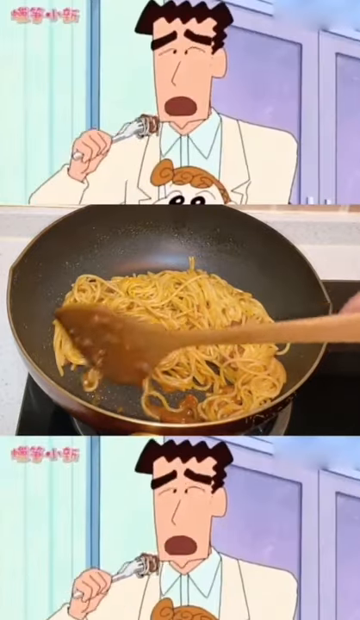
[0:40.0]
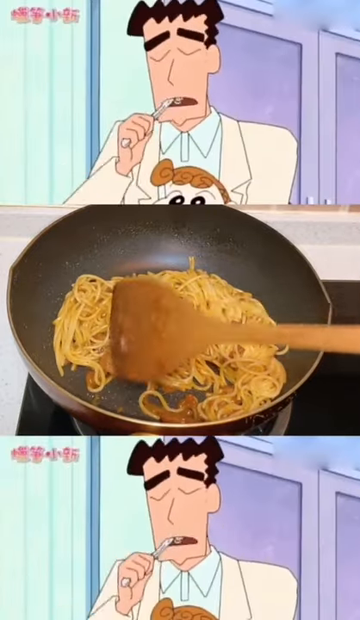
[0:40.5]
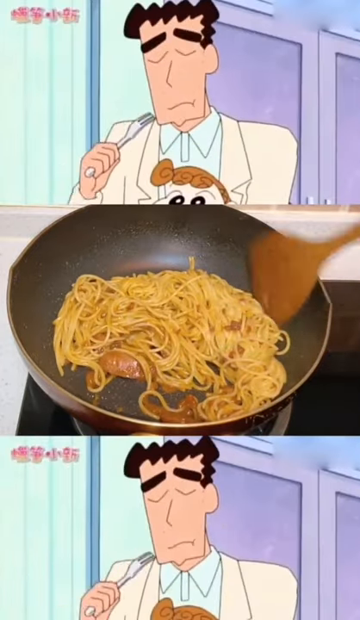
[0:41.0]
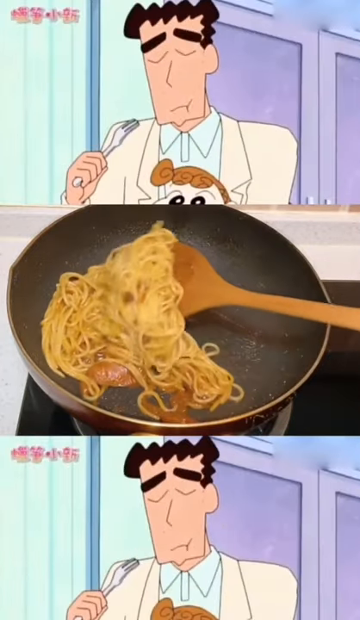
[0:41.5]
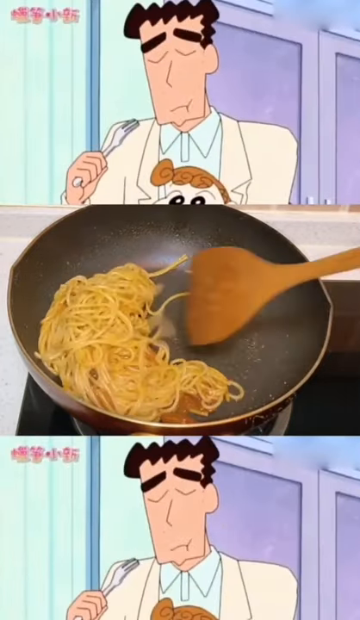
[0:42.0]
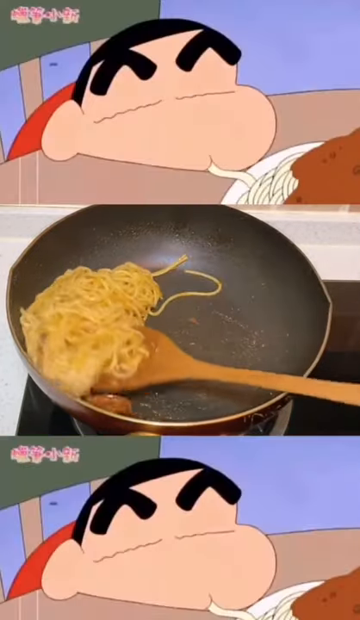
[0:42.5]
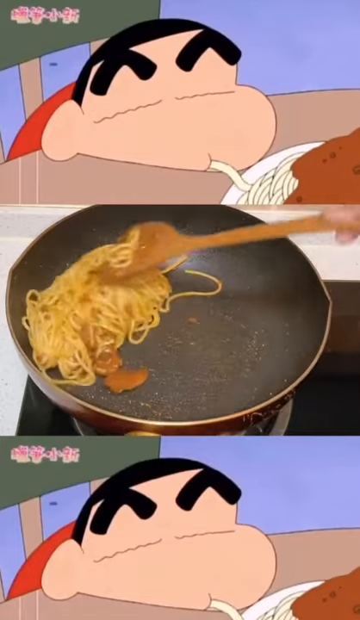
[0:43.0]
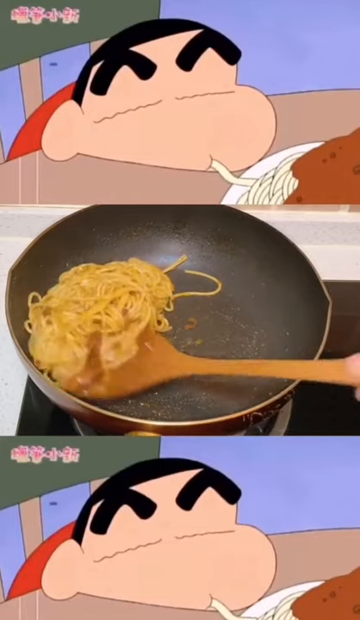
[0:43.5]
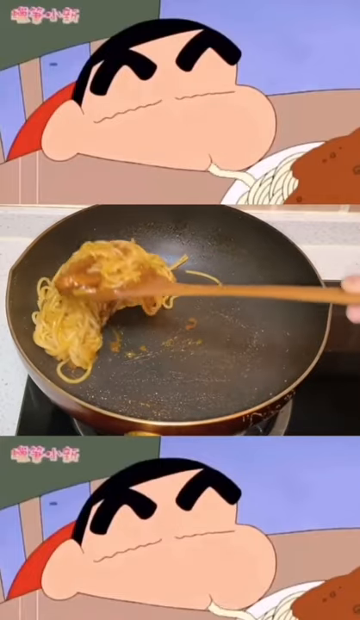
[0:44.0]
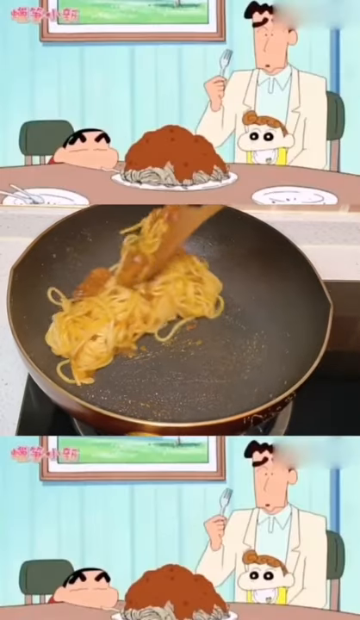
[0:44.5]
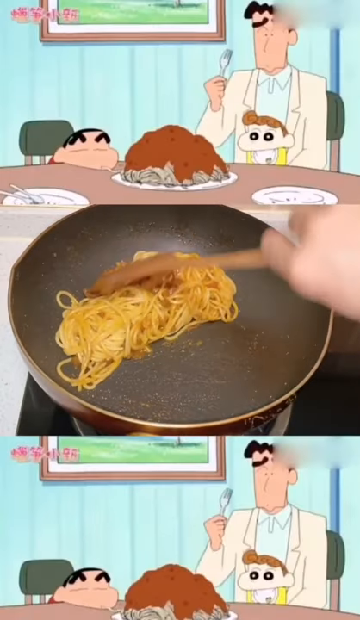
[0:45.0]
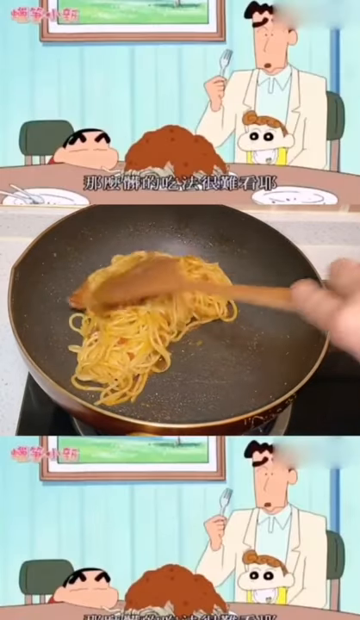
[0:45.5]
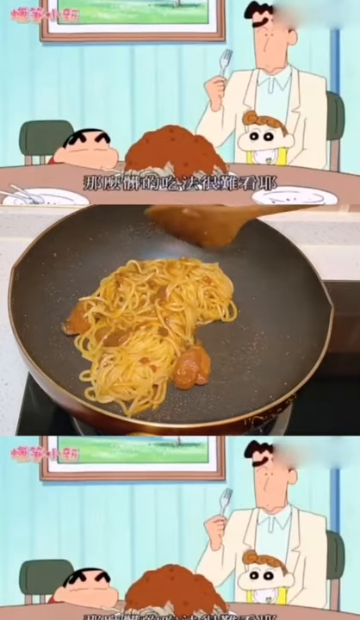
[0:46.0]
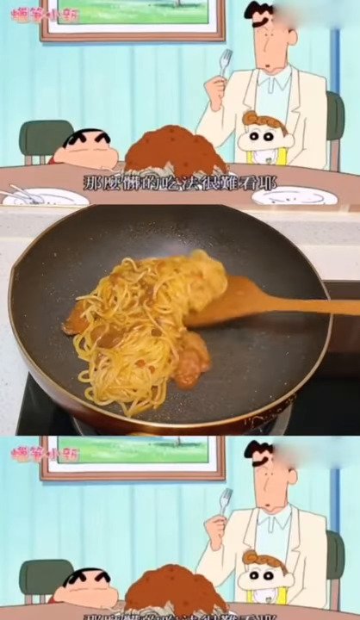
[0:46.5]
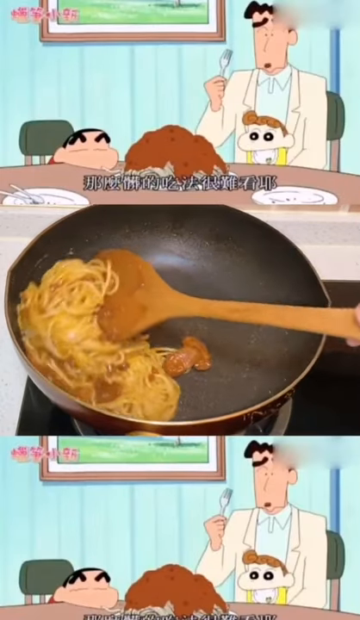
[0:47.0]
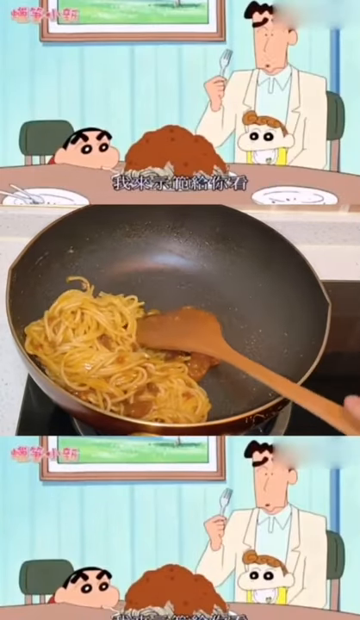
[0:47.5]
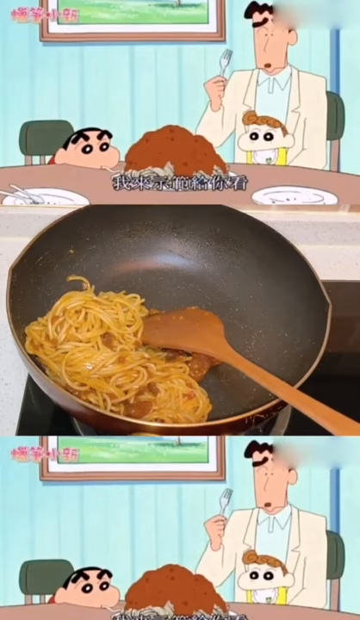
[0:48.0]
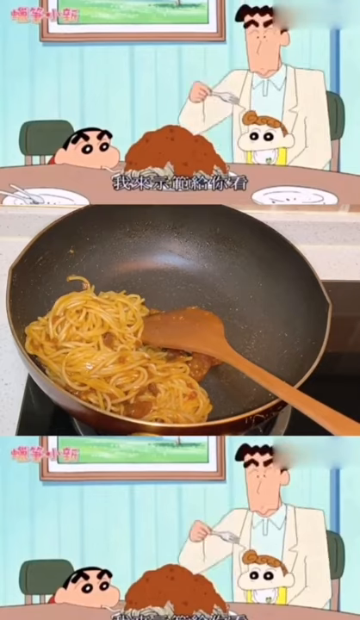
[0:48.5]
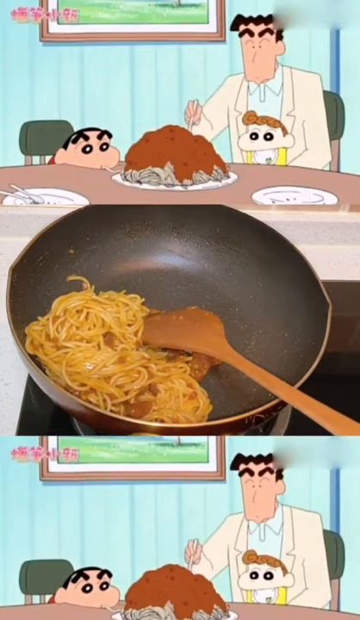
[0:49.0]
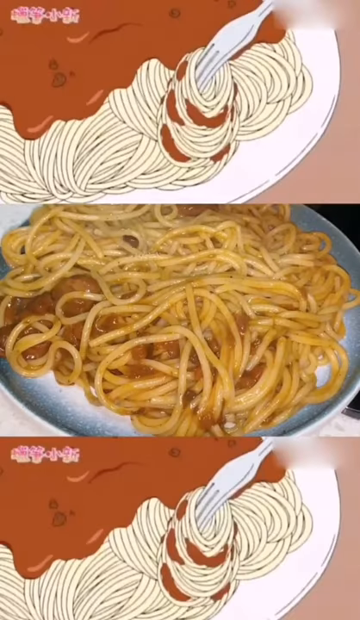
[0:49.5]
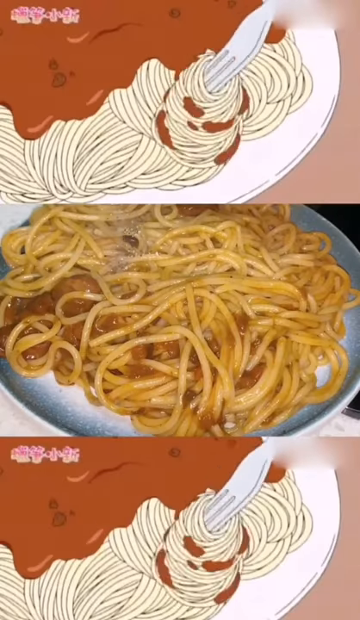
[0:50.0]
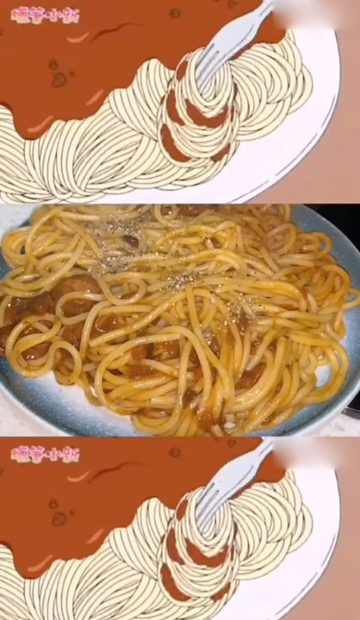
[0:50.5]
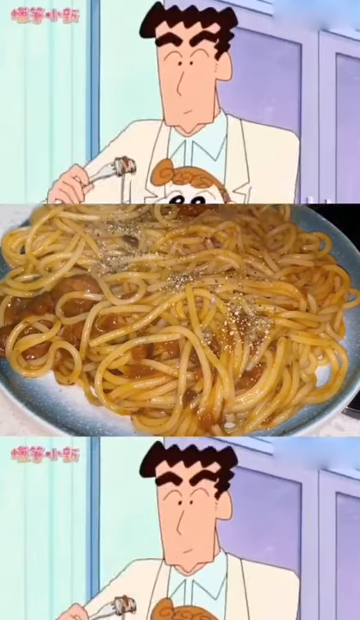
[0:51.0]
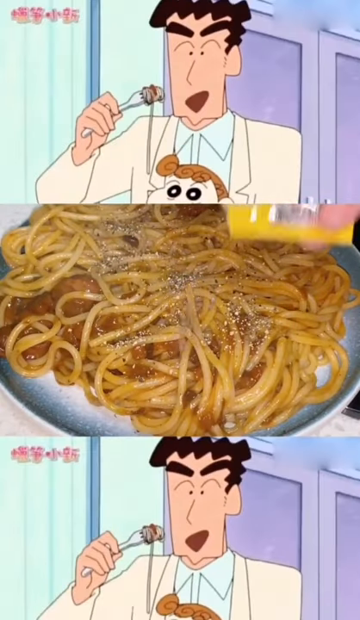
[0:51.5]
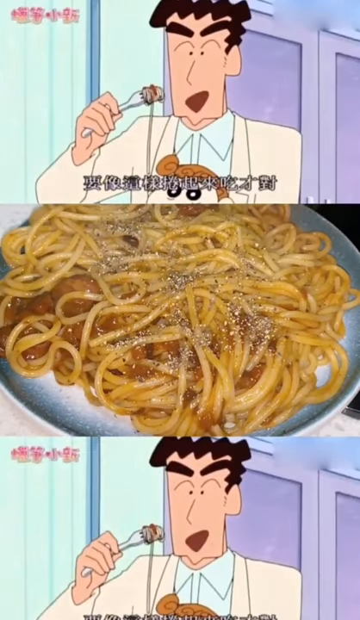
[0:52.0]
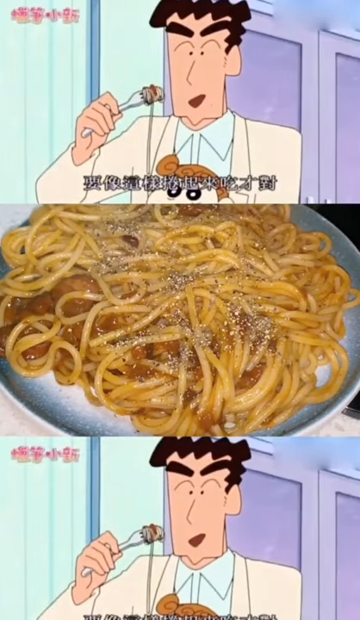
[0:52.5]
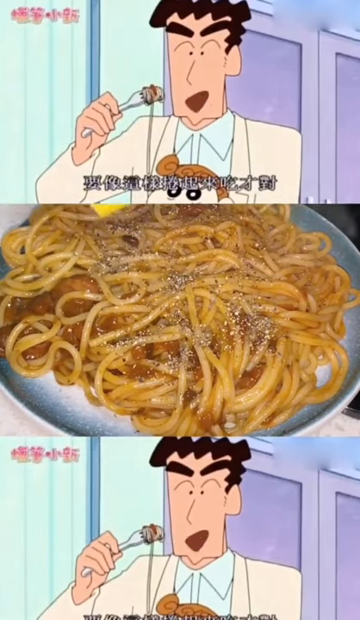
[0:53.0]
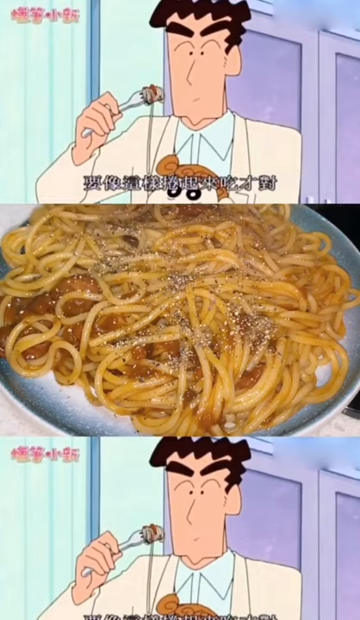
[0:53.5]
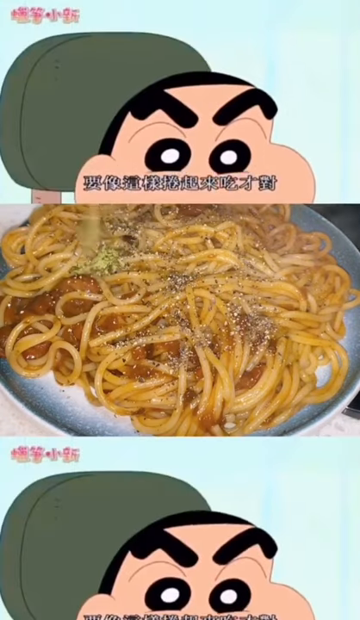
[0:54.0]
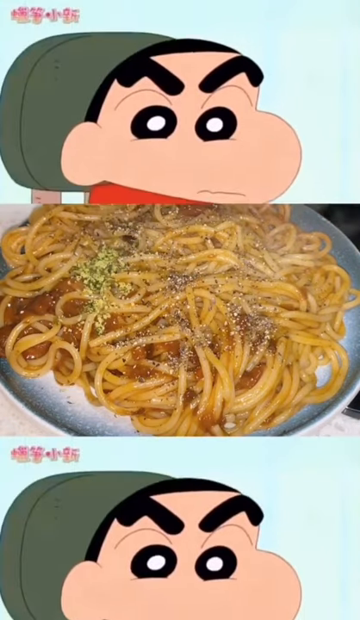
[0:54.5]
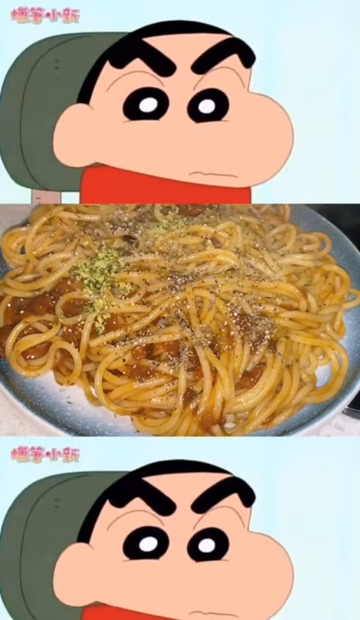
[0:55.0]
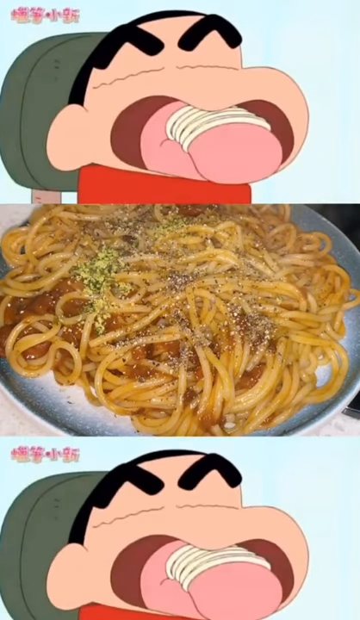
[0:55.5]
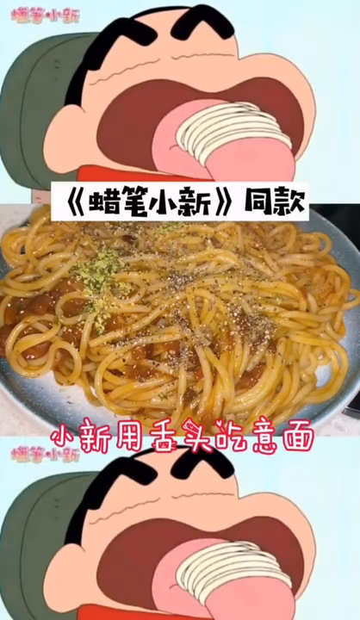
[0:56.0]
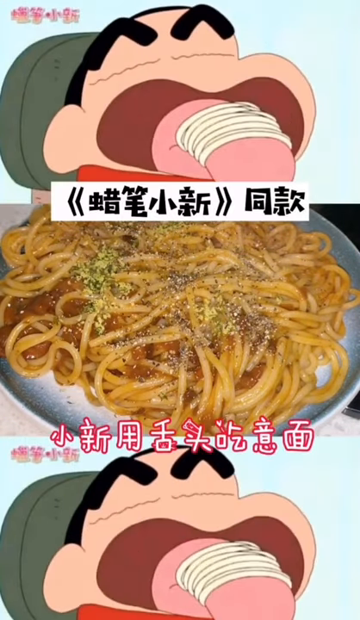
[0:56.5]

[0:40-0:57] In the middle video, the person continues to flip and move the spaghetti around the frying pan for several seconds, then it cuts to the spaghetti already on a plate, without showing it being taken out of the pan. Seasoning is added on top of the spaghetti from a packet: first a black seasoning, maybe salt and pepper, then a green seasoning on top of that. The cartoon continues to play at the top and bottom. After the adult puts spaghetti in his mouth, a young child slowly slurps some spaghetti off the plate; as he does, the view zooms out and the adult, maybe the father, is speaking, then goes for more spaghetti, which he twirls onto the fork. The cartoon ends with the child who was slurping showing his tongue with the spaghetti kind of wrapped around it.